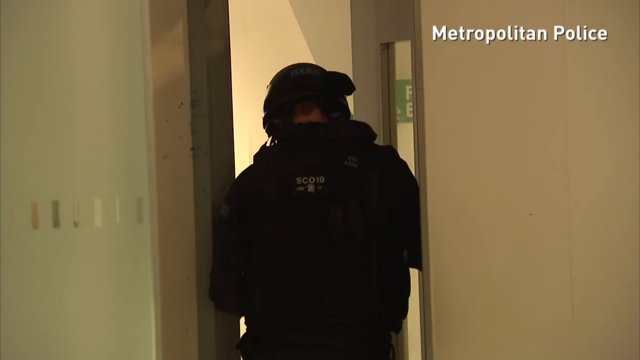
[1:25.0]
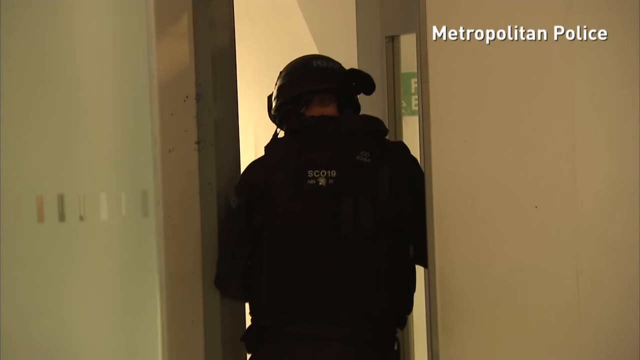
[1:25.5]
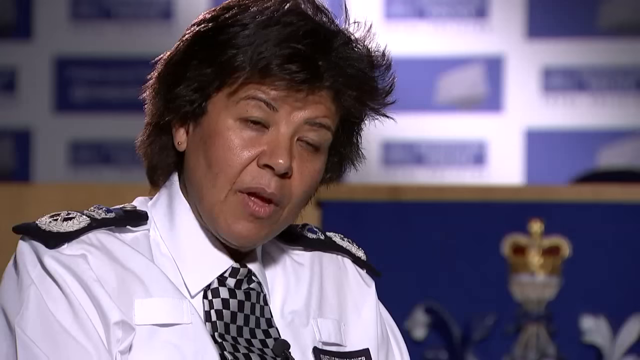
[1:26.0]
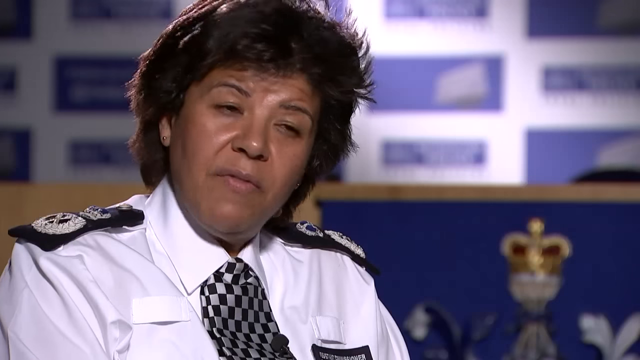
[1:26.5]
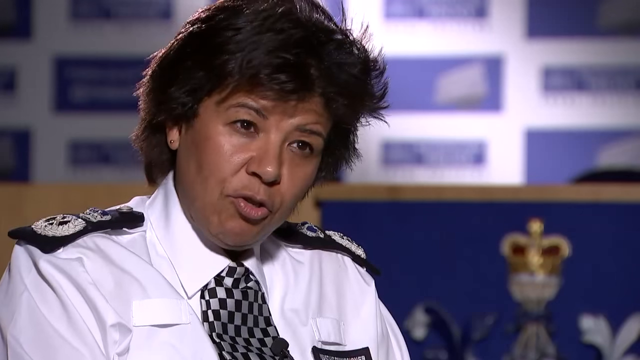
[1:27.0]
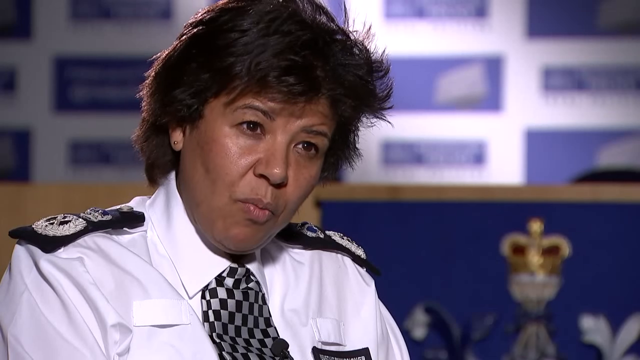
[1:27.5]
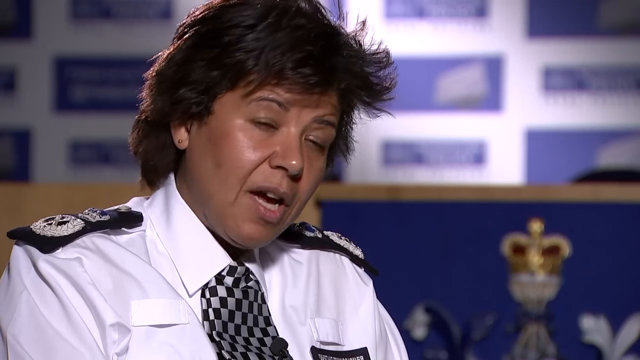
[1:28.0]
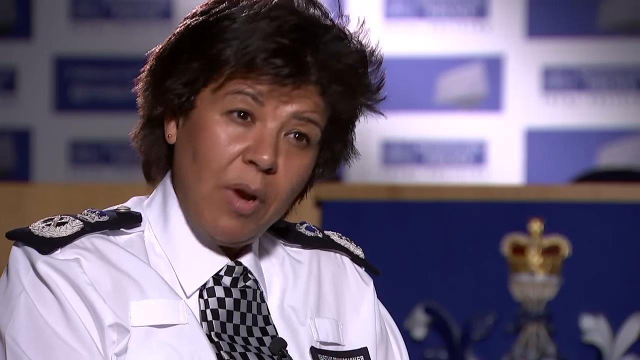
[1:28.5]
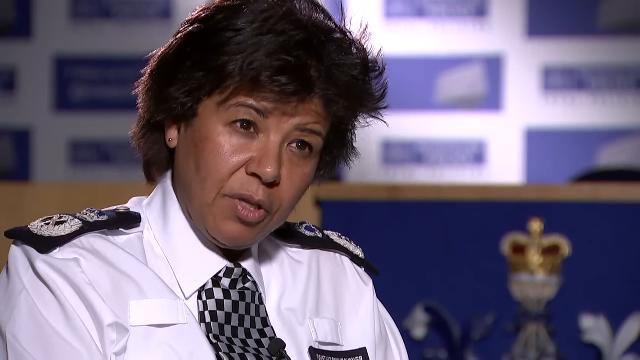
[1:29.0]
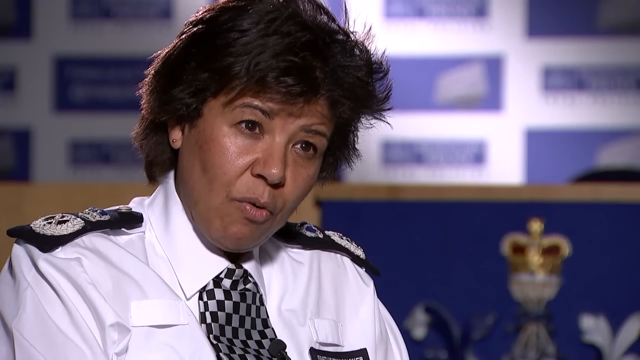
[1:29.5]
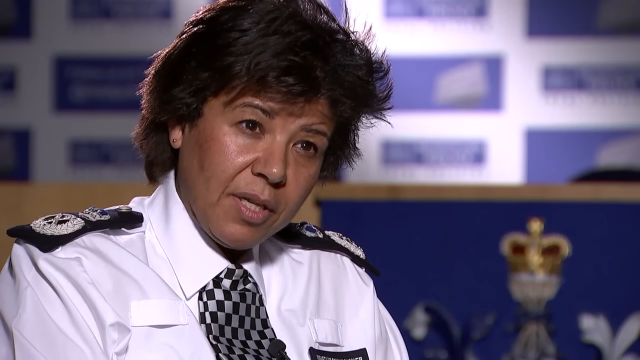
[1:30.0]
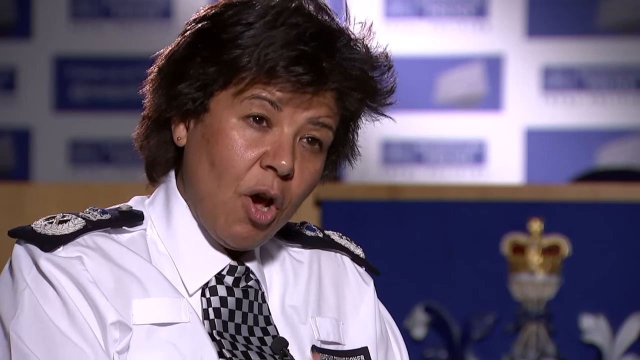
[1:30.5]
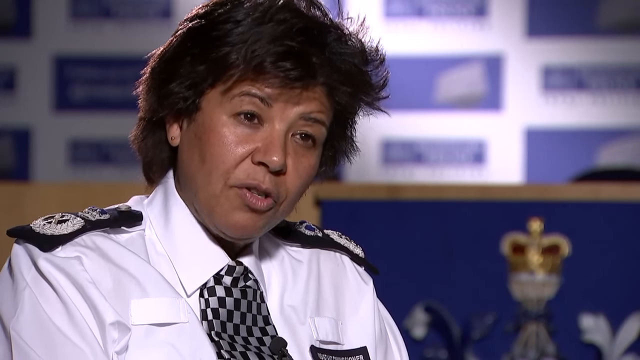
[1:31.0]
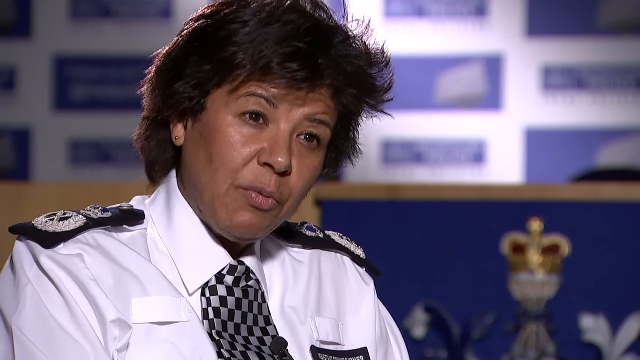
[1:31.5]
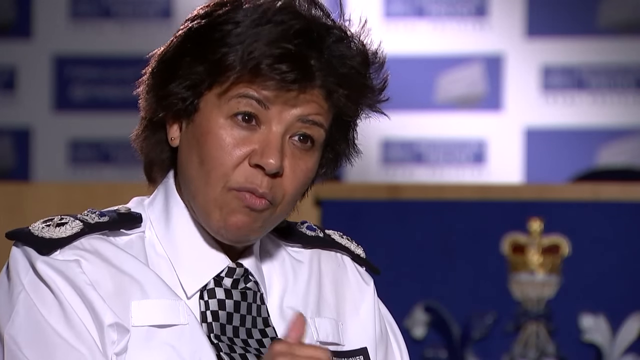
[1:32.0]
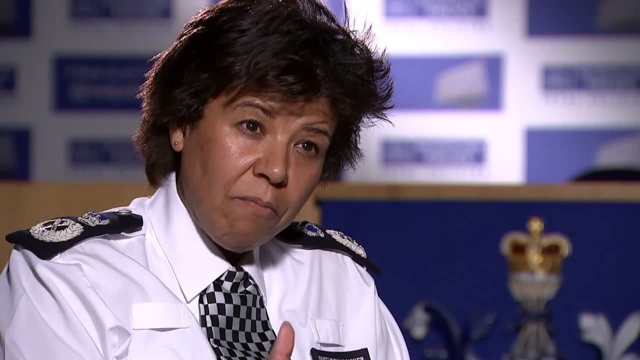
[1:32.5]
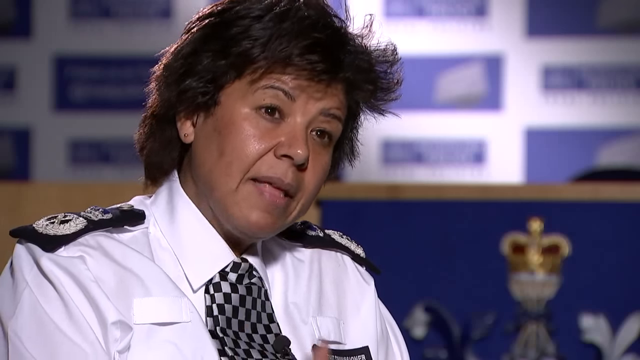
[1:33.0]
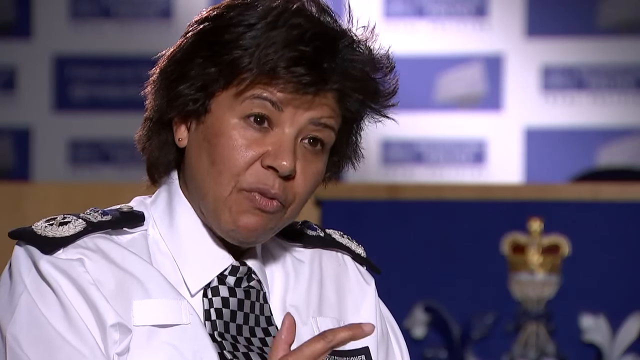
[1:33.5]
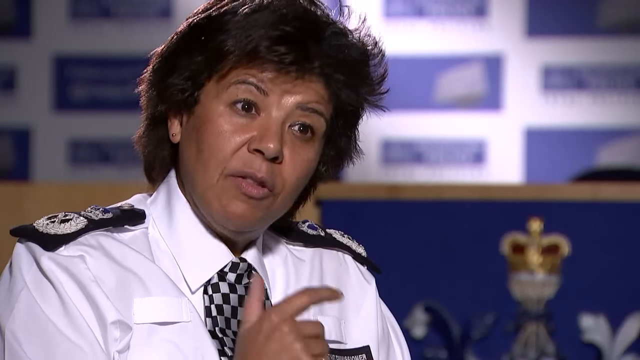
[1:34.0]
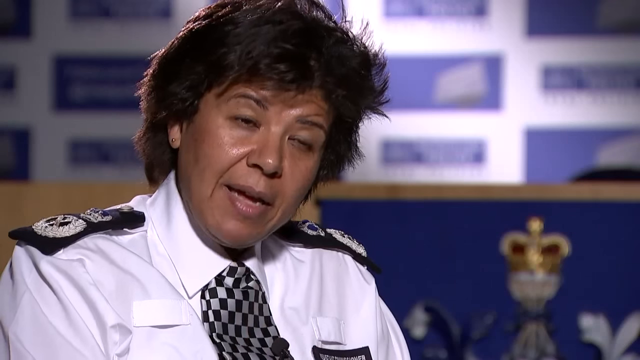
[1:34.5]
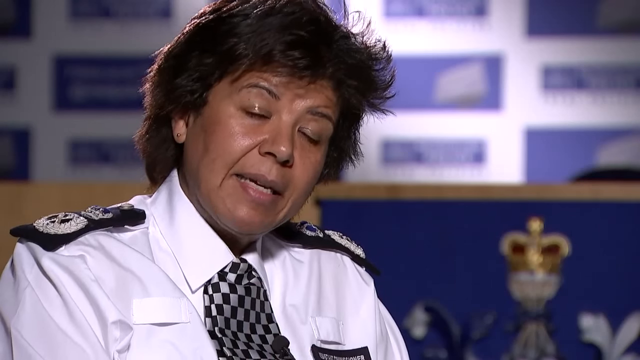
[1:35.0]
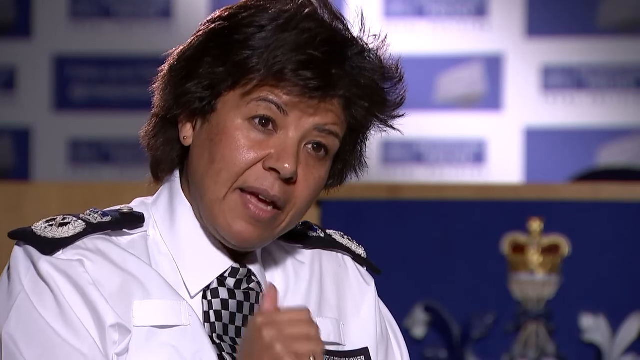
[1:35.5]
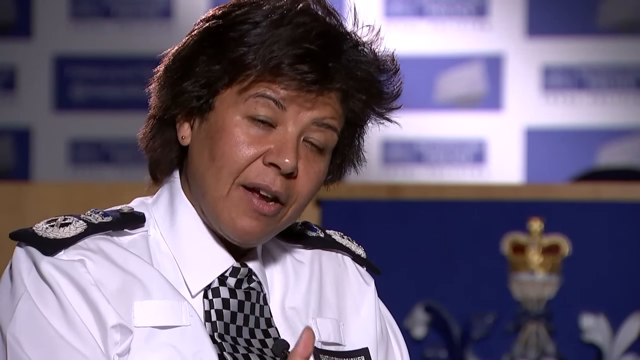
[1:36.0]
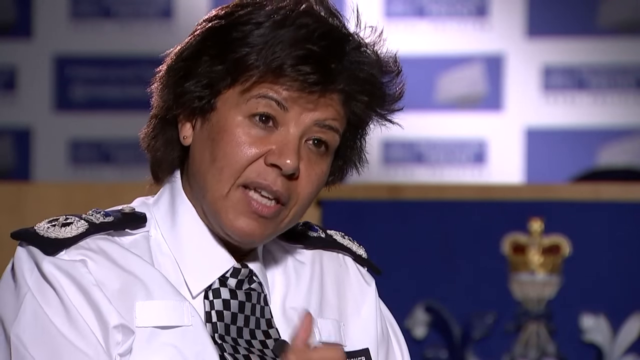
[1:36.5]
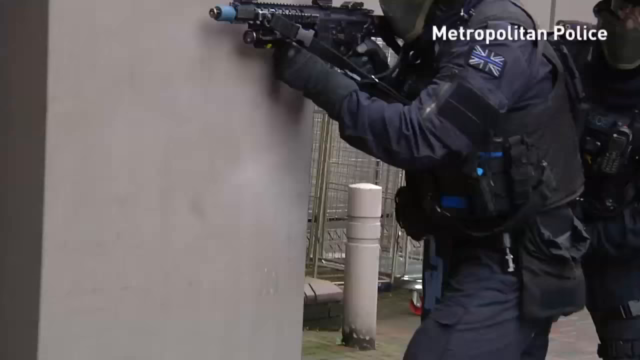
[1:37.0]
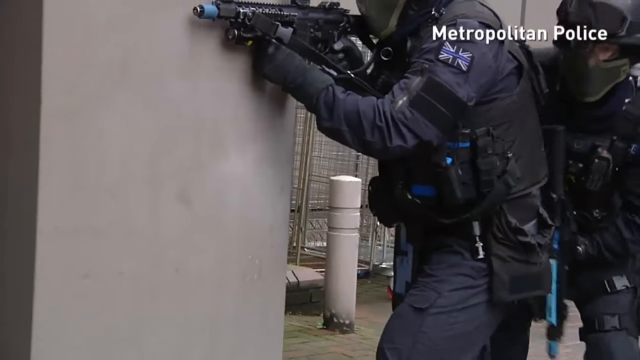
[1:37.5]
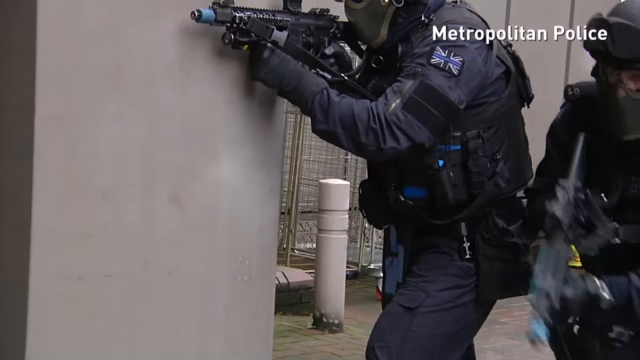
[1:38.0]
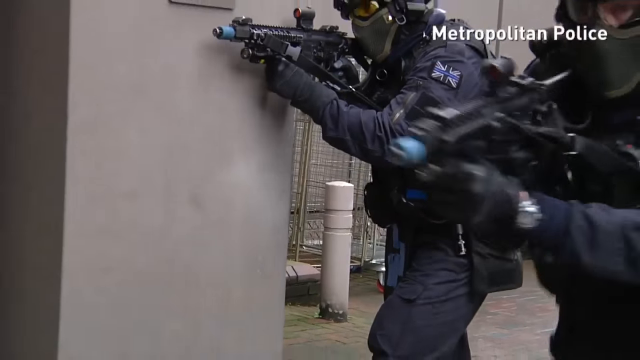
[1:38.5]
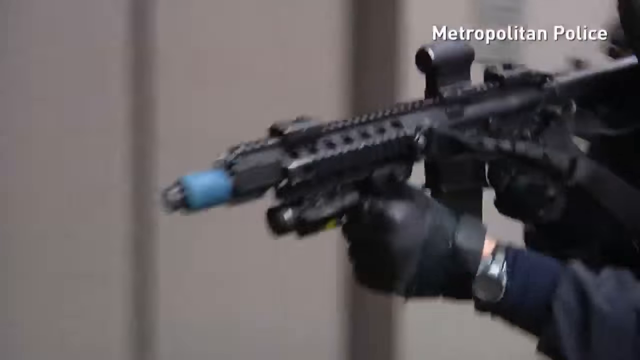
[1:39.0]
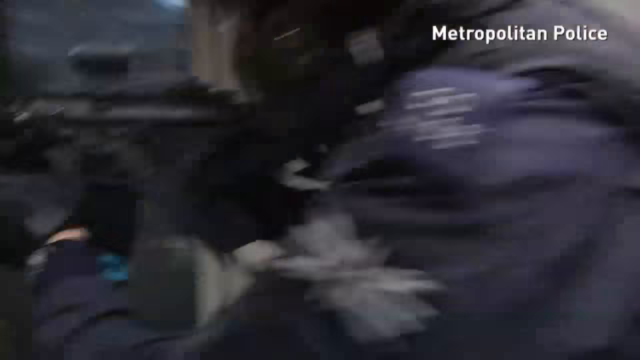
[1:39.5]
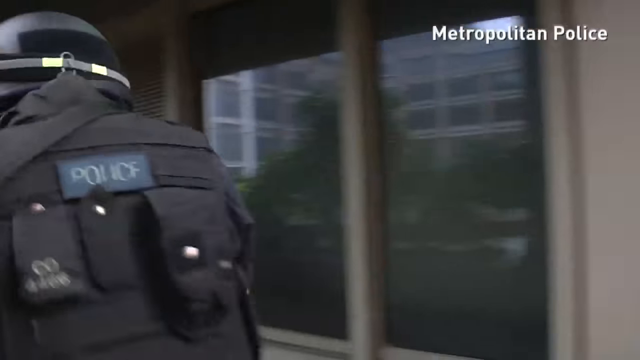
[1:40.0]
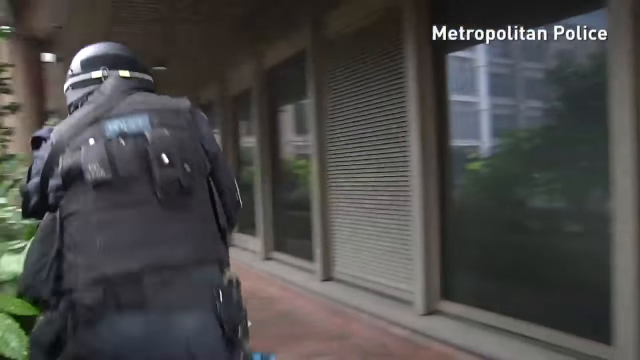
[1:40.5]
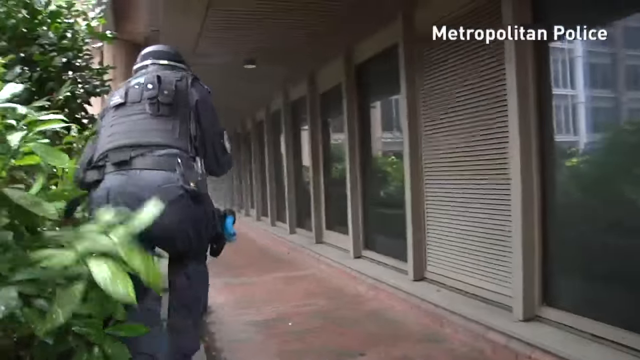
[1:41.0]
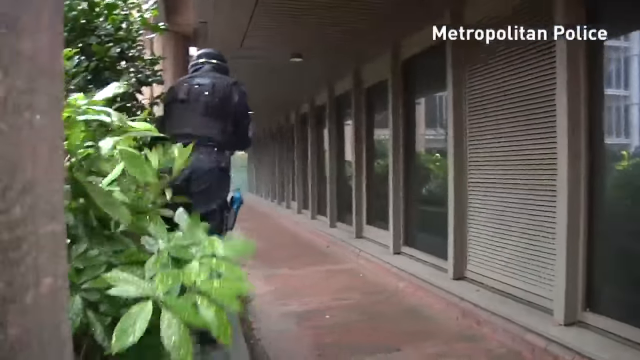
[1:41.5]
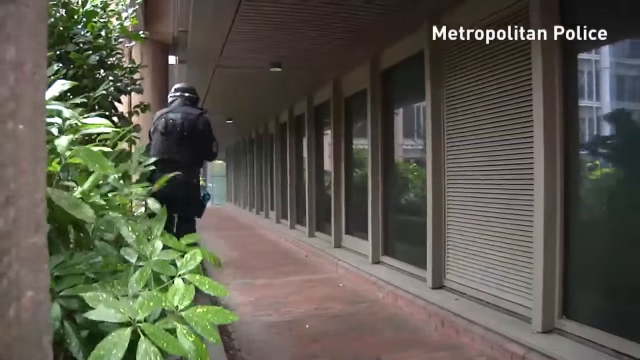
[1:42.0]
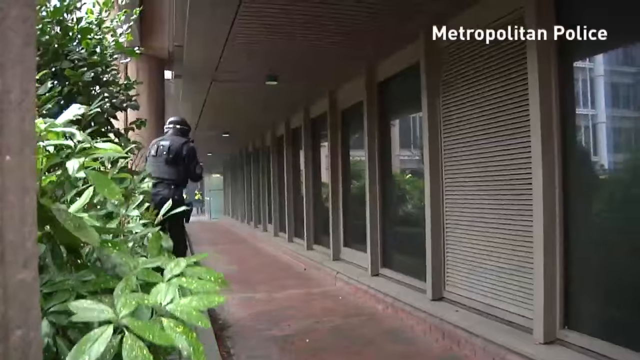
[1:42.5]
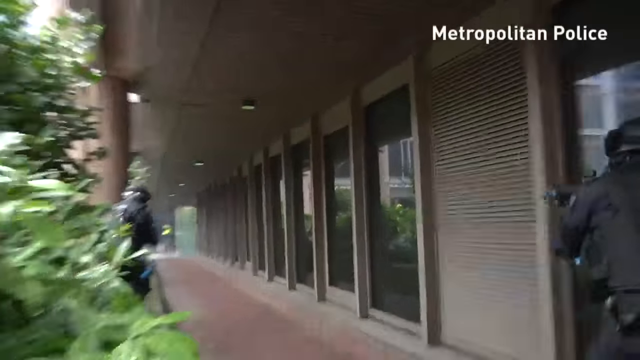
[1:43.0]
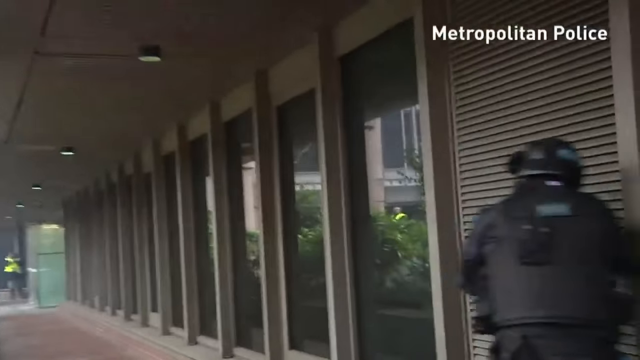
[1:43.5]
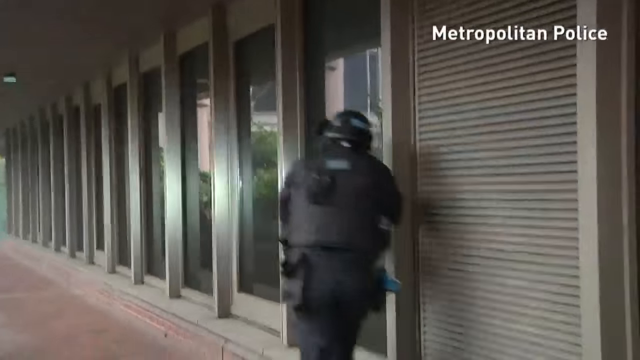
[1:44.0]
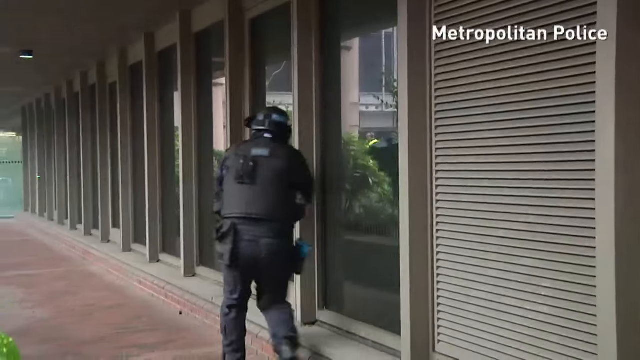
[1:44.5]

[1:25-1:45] The video goes back to the woman being interviewed, apparently explaining the process. Then police are outside the building, spread out and circling it, apparently making sure no attackers remain. There seem to be two or three men; one is really close to the bushes, almost half his body in the bushes, running along them, while the other two are on the sidewalk.